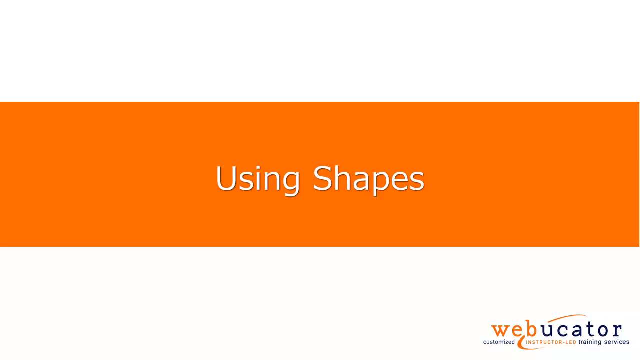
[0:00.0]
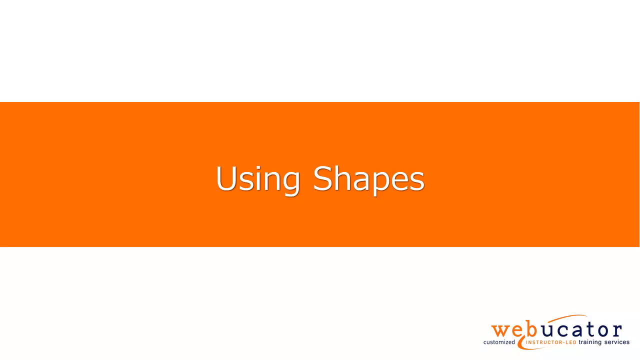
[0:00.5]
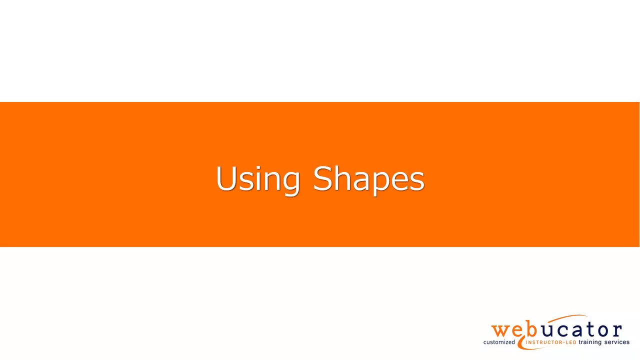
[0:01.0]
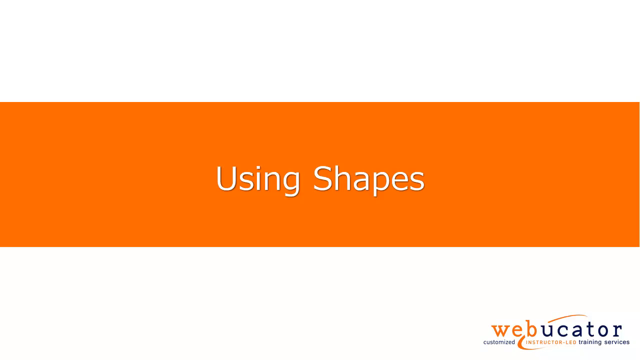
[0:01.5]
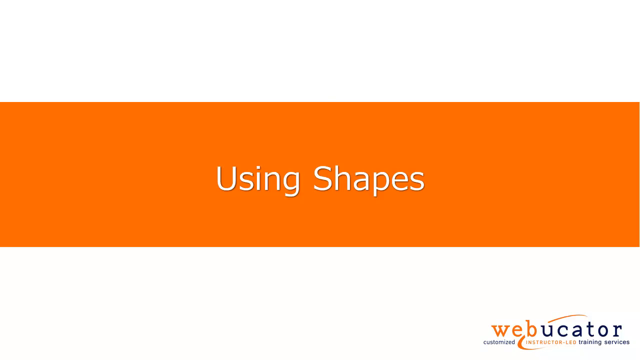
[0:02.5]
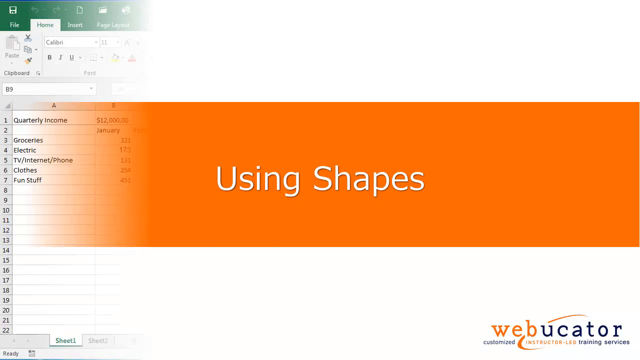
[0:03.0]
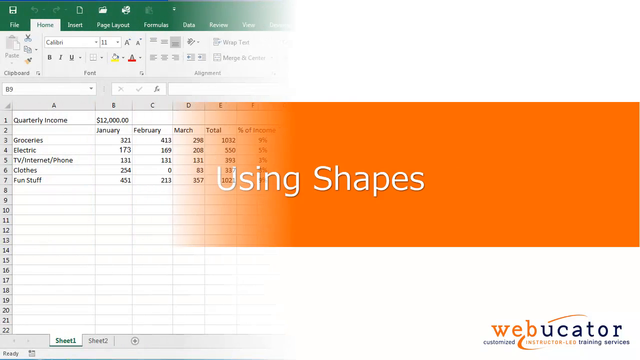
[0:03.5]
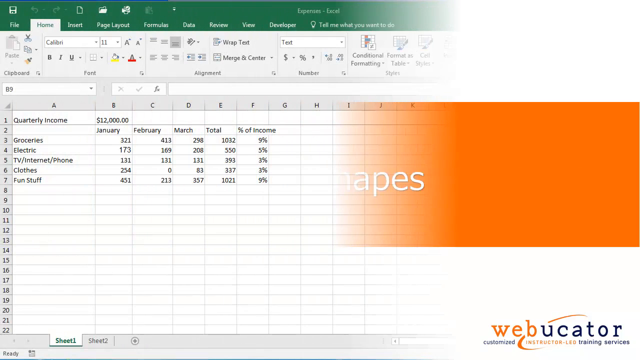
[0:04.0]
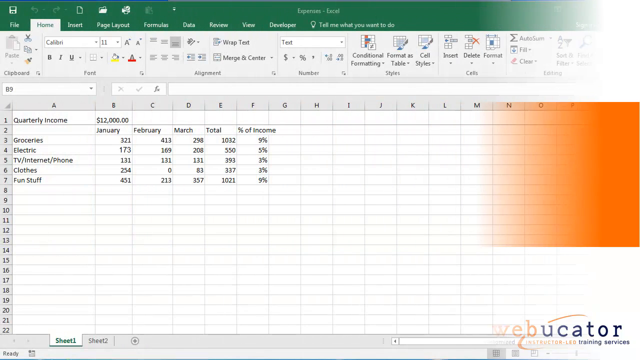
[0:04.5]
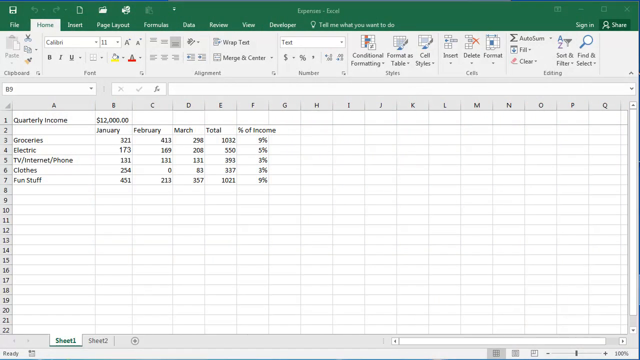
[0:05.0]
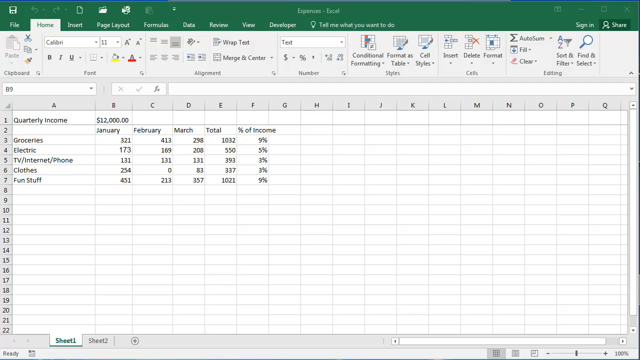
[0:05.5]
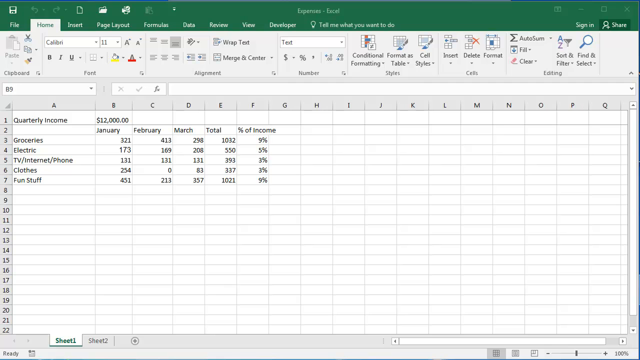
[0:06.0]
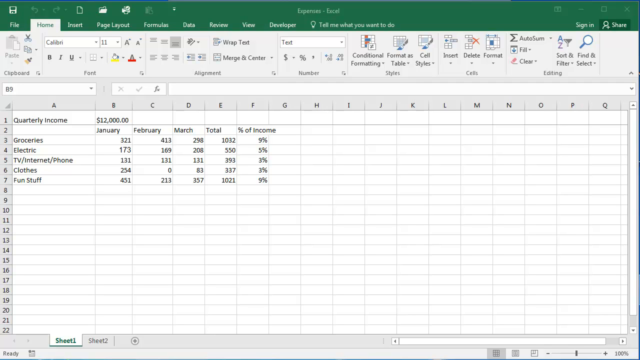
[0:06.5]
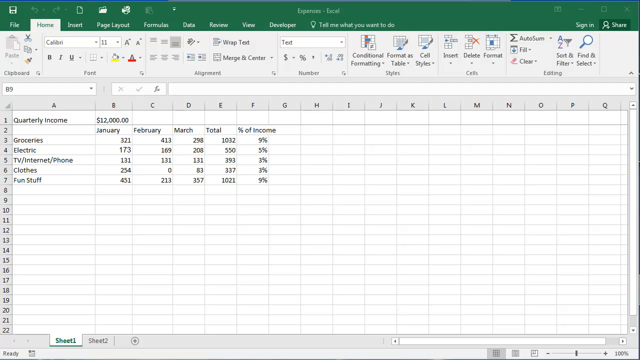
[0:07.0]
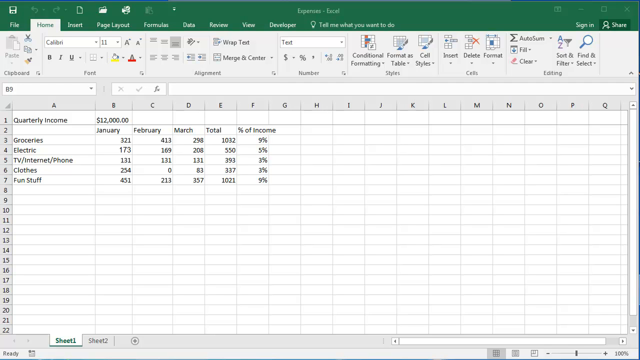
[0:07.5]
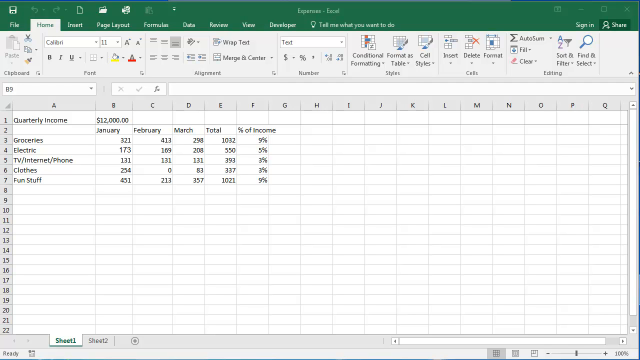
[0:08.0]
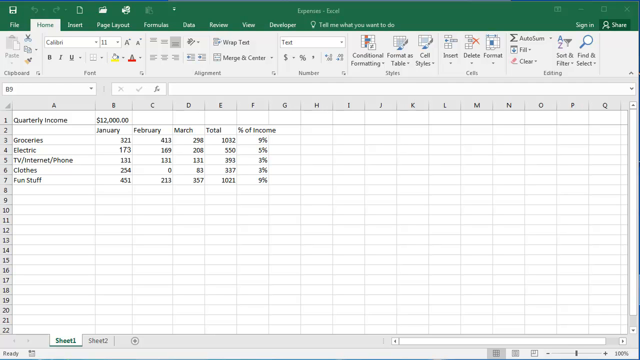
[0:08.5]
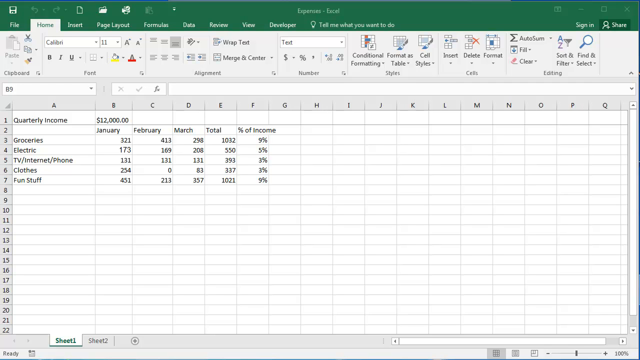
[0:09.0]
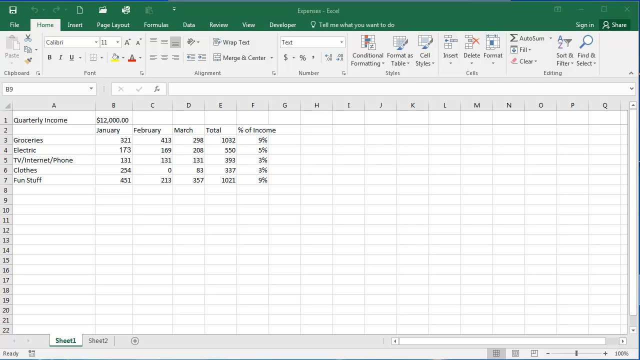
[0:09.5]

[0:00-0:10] The video opens on a white screen with a computer graphic on it. An orange bar runs across the center, and inside it white text reads "using shapes." The screen stays on this for a while, then an Excel sheet fades in. The Excel program shows some columns with text in them. At the top is a green bar with the menu items "file," "home," "insert," "page layout," "formula," "data," "review," "view," "developer" and "tell me what you want to do," followed by a whole bunch of options for the sheet. Below is the spreadsheet someone is making: at the very top of column A it says "quarterly income," and then row 3 says "groceries," row 4 "electric," row 5 "tv internet and phone," row 6 "clothes" and row 7 "fun stuff." Months run across: "january," "february," "march," then "total" and "percent of income." At the top of column B the quarterly income is shown as $12,000.